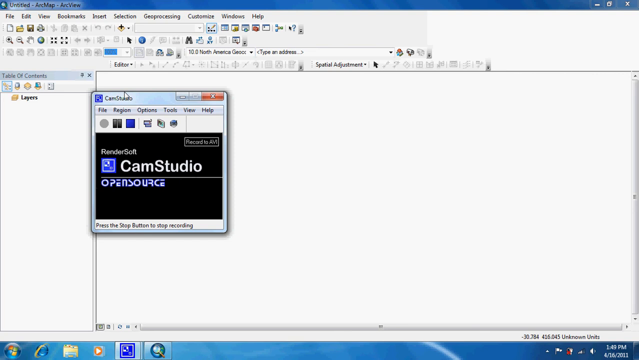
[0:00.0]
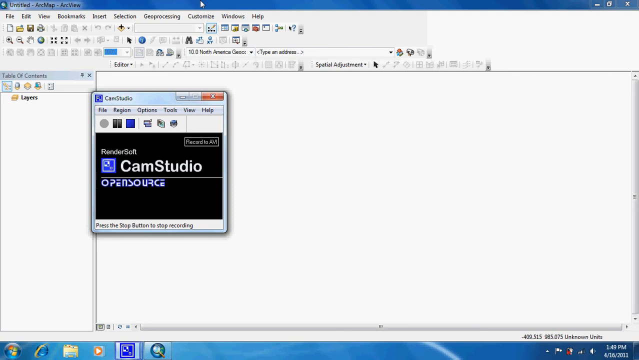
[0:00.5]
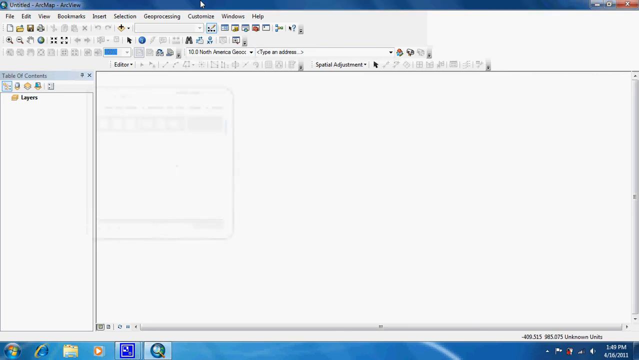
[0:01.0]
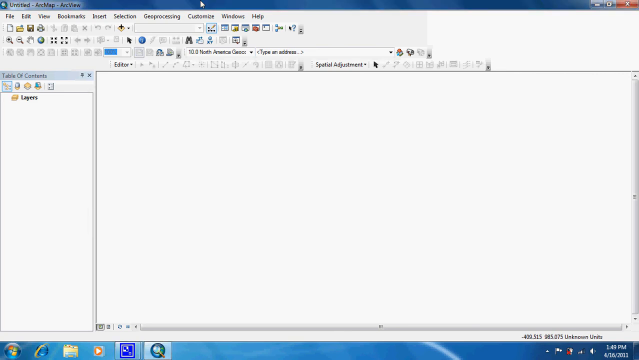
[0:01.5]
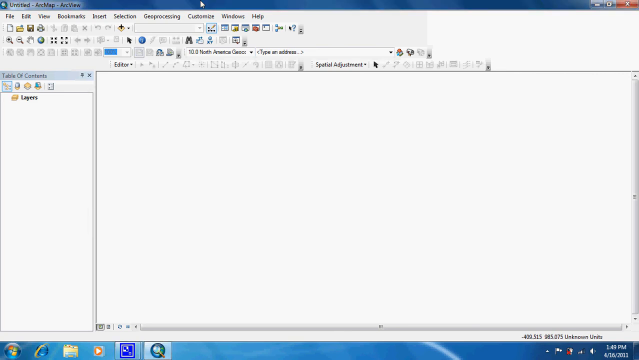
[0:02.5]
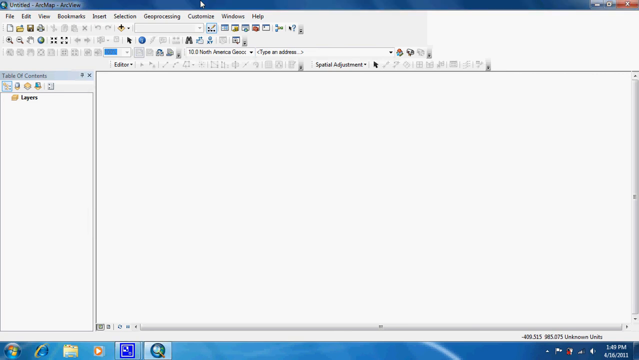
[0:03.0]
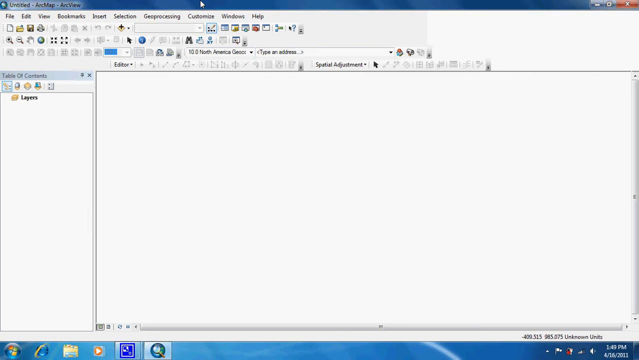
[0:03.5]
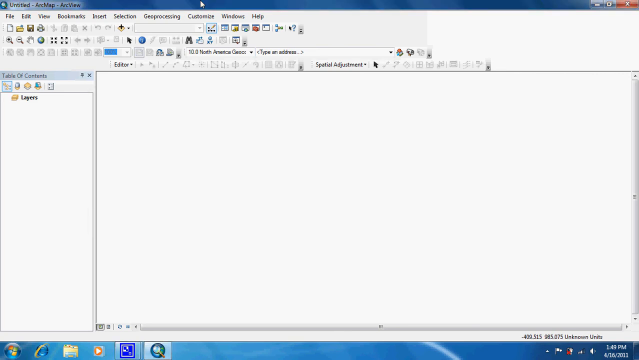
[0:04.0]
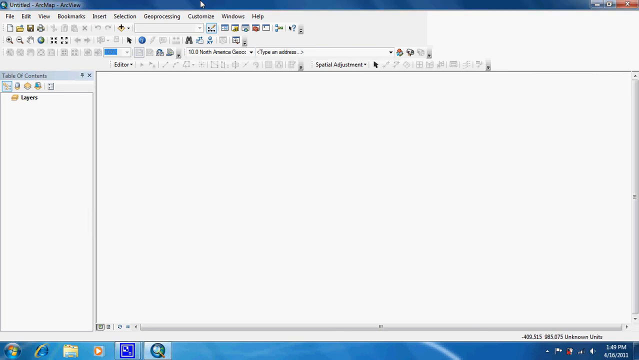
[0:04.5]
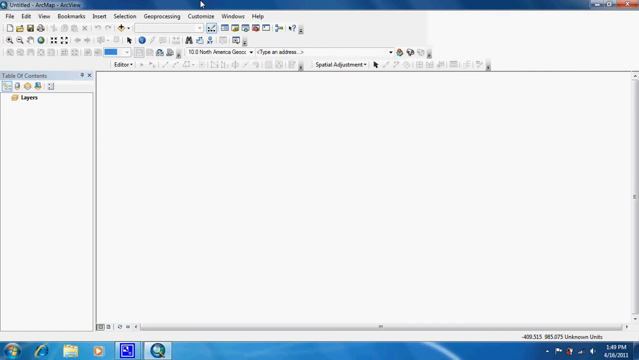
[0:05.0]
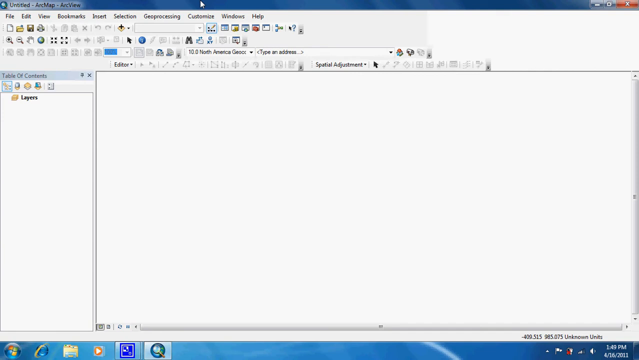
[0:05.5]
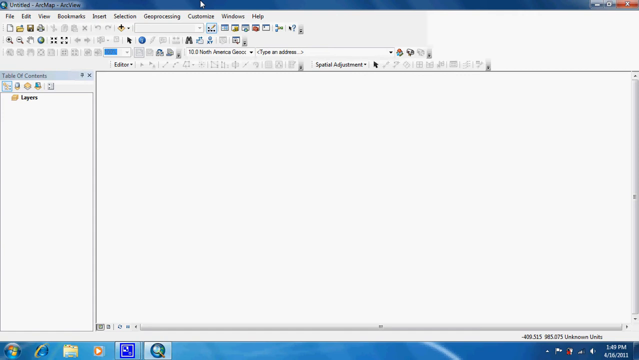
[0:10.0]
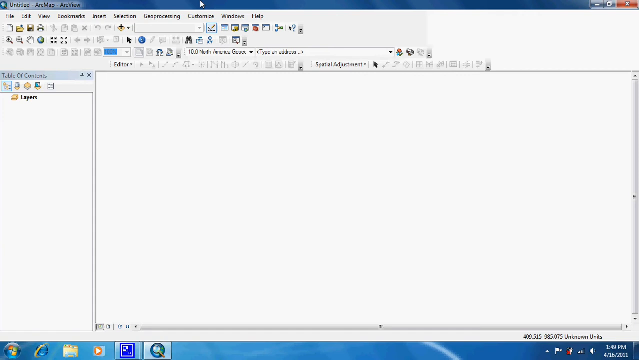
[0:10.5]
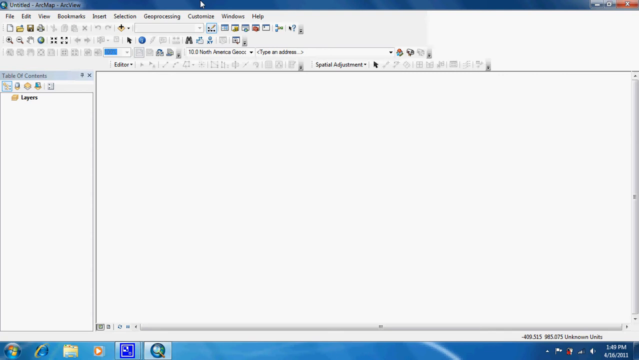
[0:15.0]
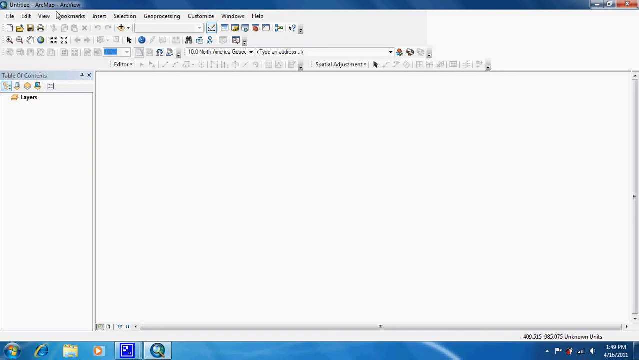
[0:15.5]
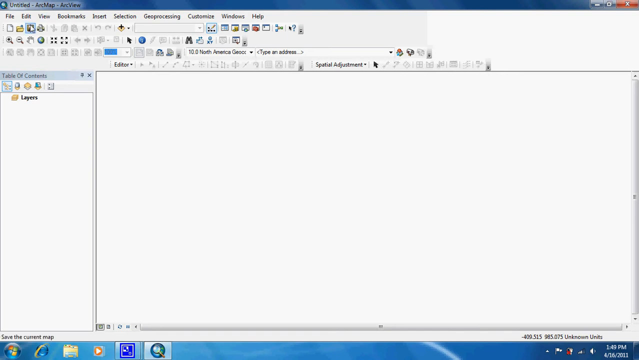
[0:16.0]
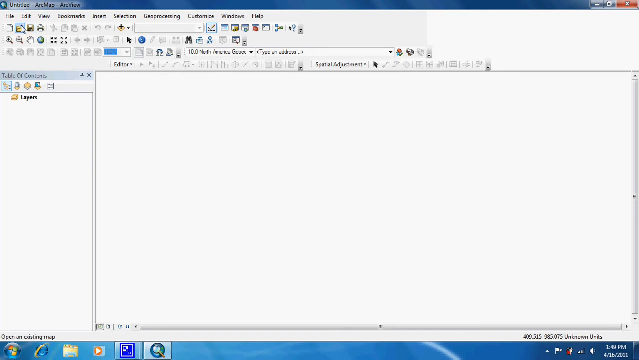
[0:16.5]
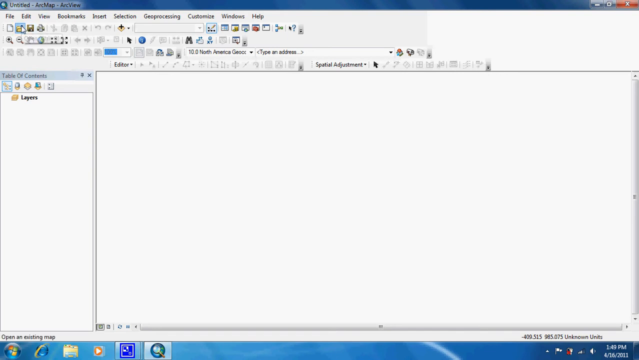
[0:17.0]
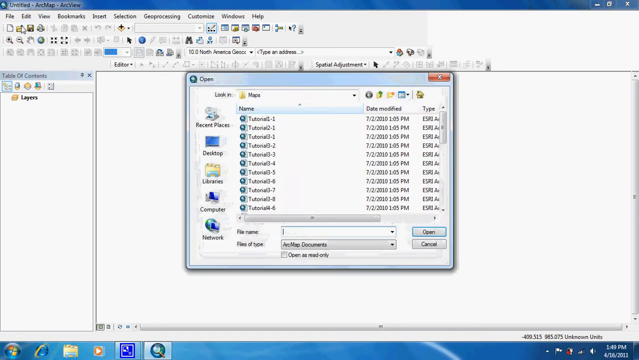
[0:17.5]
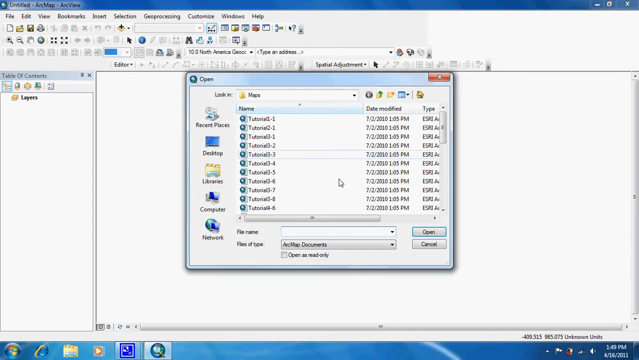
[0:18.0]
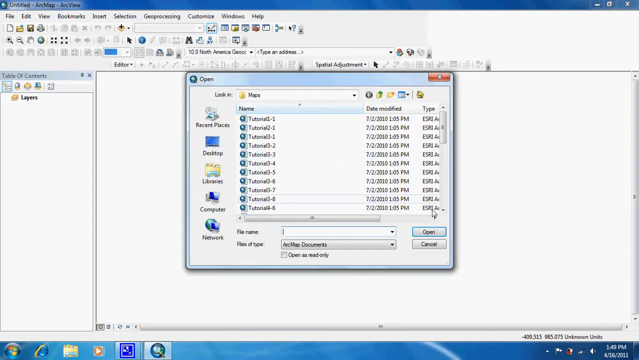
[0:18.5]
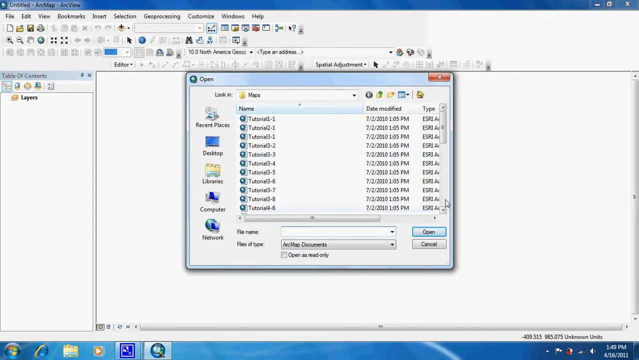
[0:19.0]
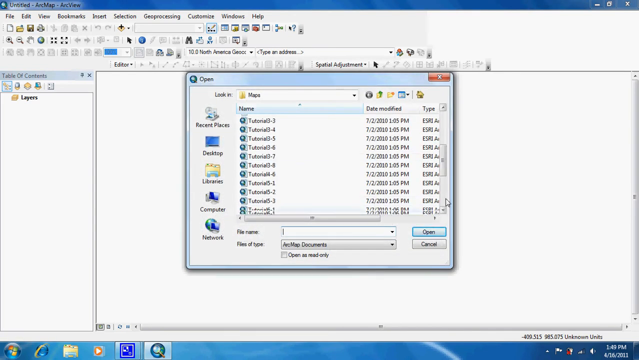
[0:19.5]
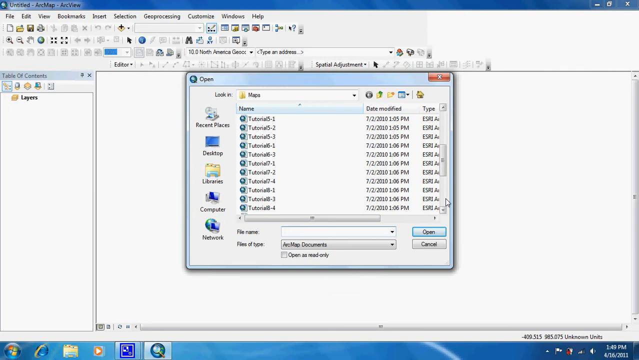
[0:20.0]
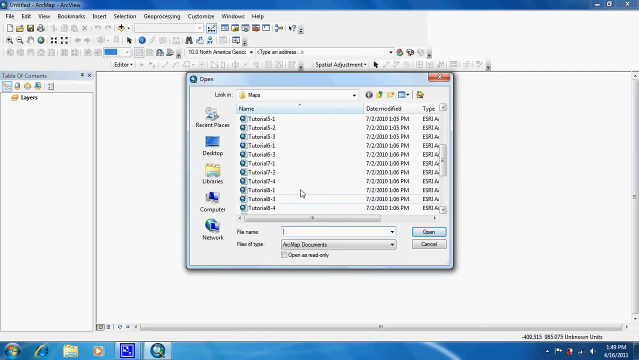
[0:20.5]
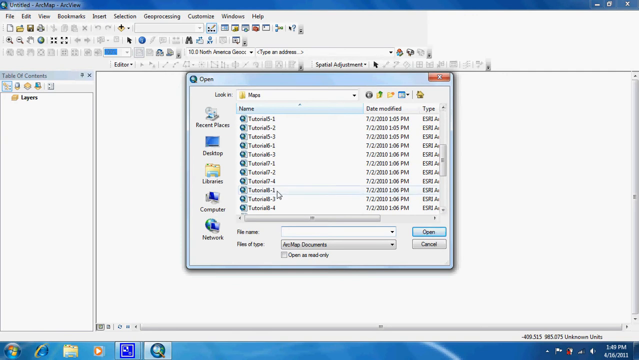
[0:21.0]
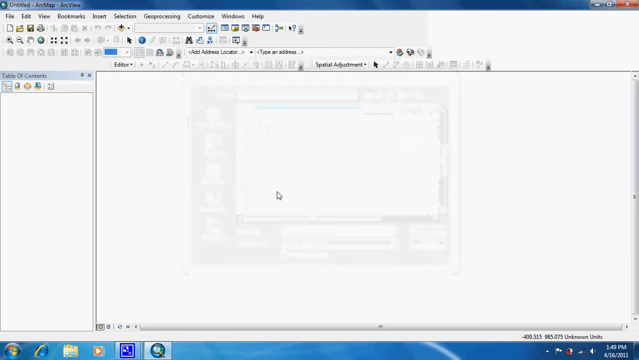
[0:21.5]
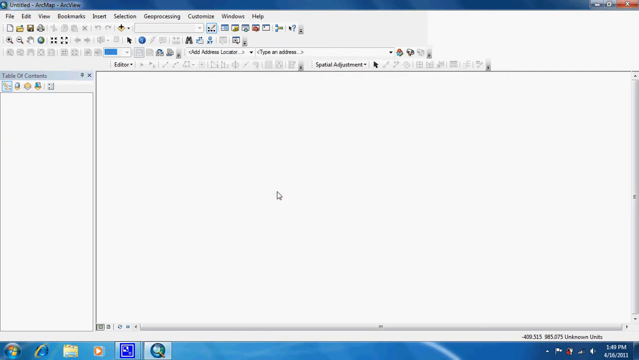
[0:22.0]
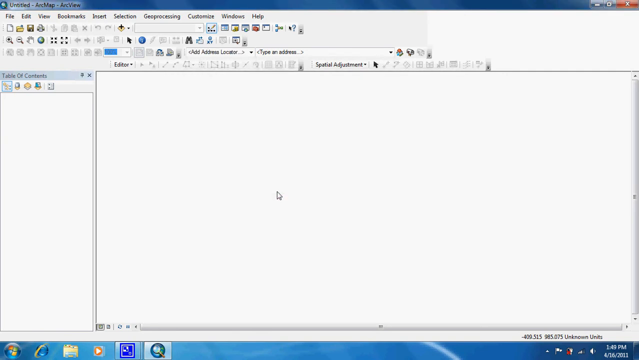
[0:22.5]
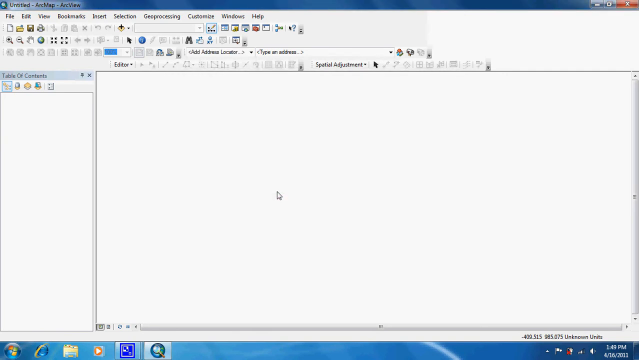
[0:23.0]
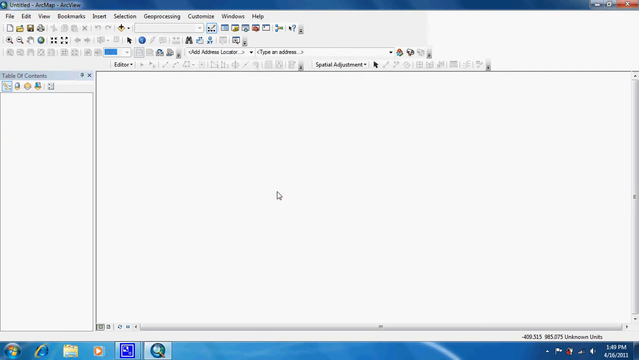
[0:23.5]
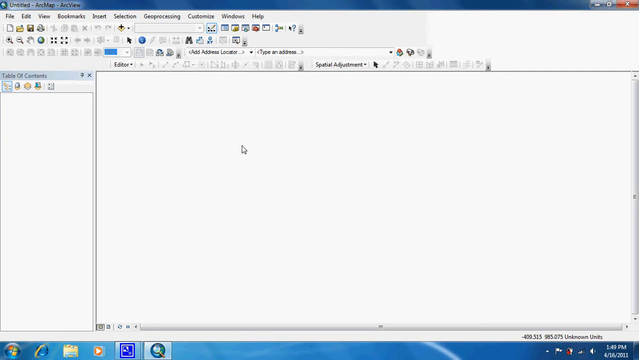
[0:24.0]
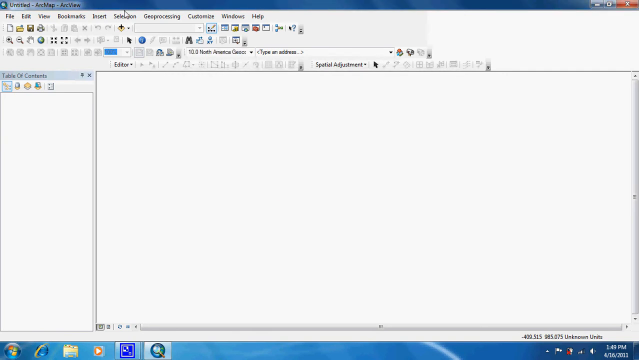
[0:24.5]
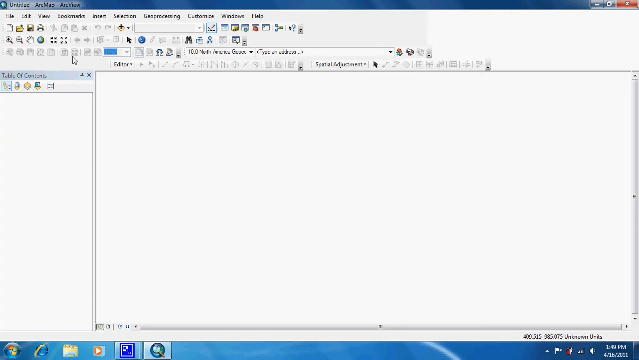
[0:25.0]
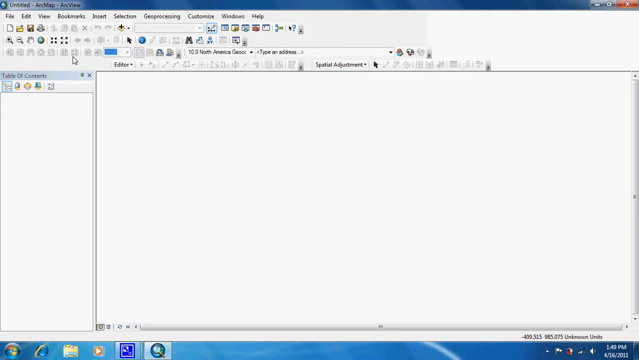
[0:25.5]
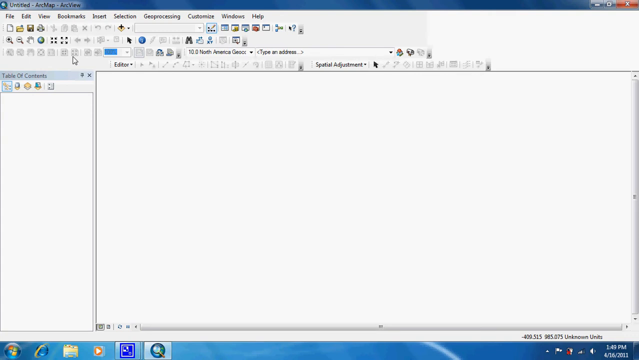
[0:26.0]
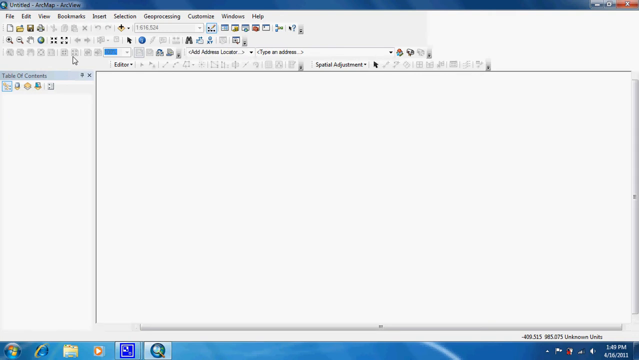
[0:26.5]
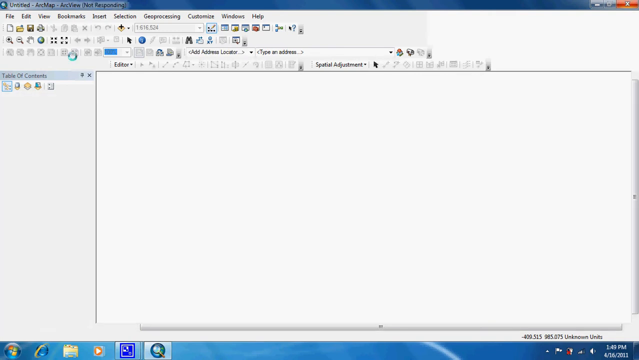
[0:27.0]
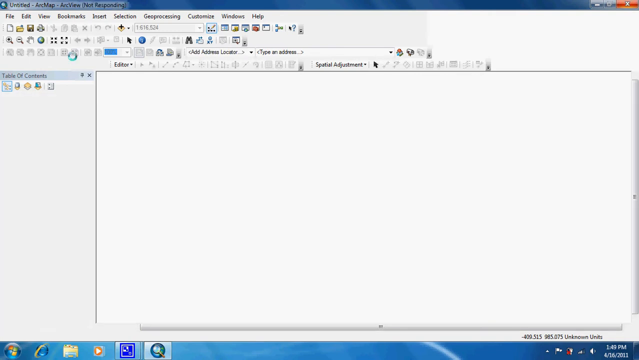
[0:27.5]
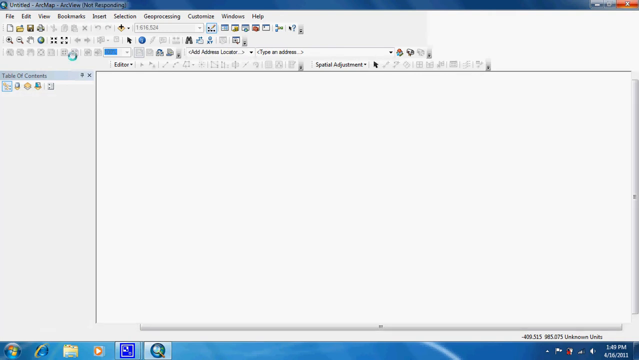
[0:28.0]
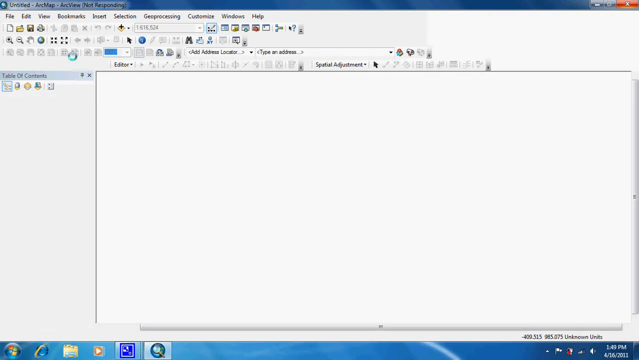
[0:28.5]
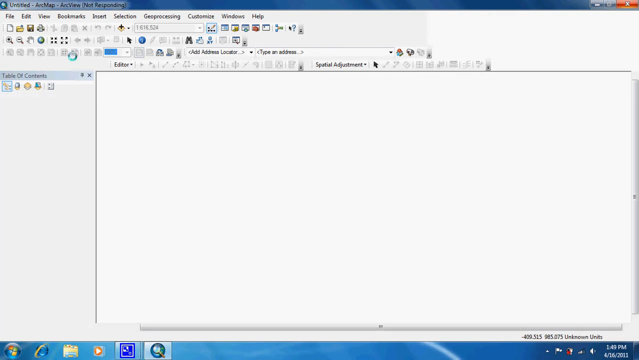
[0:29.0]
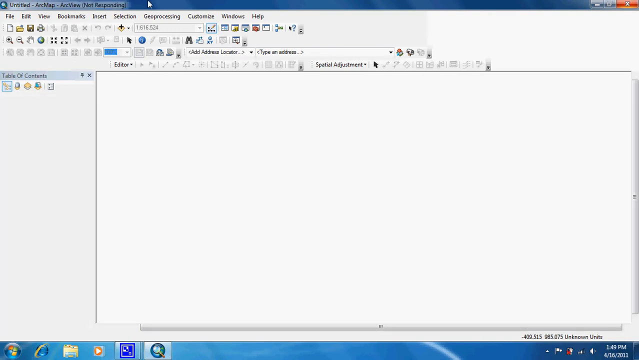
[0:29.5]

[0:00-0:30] Software is open in a typical Windows-type window, with menu options across the top and three rows of toolbar icons underneath them. Below the menu options and toolbar buttons is a blank space, and a pane on the left-hand side is also mostly blank, though it apparently contains a logos folder. The mouse pointer clicks one of the icons, apparently the open icon, and a window opens showing directories and files. The pointer double-clicks one of the files, which seems to open, but "not responding" appears in the menu bar.